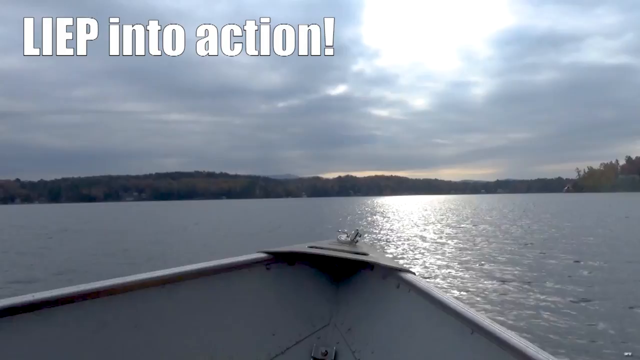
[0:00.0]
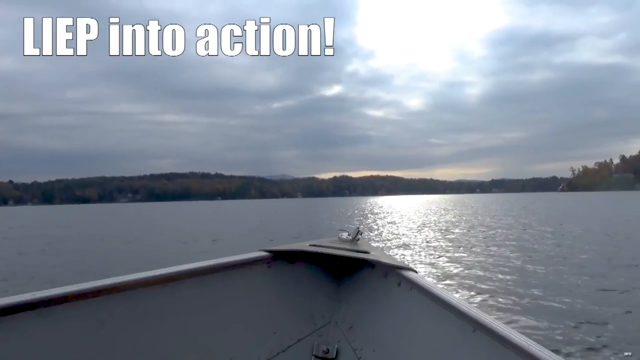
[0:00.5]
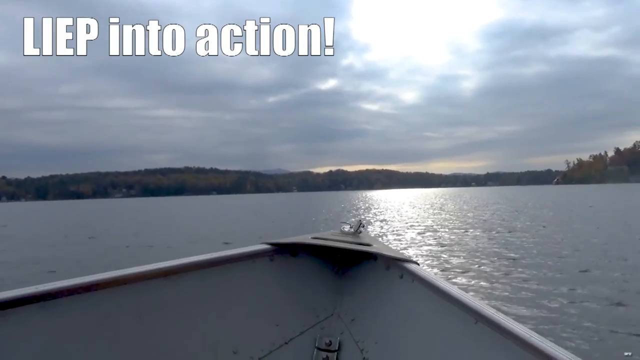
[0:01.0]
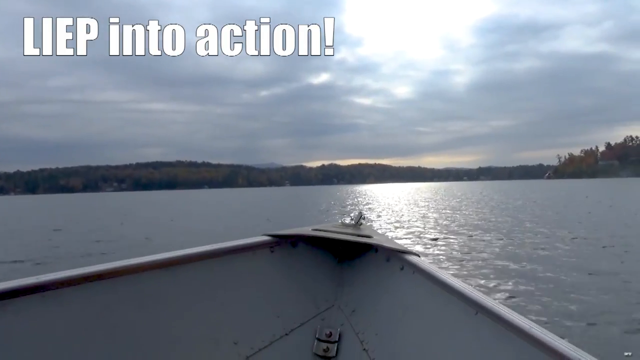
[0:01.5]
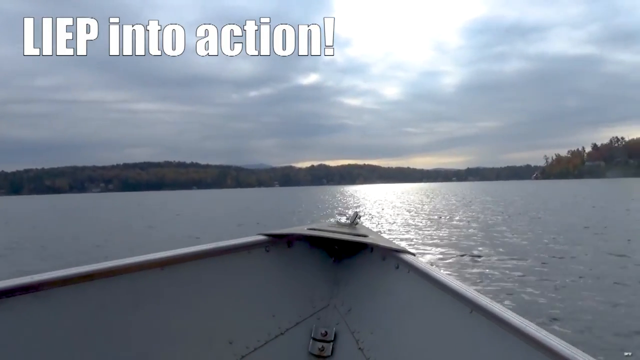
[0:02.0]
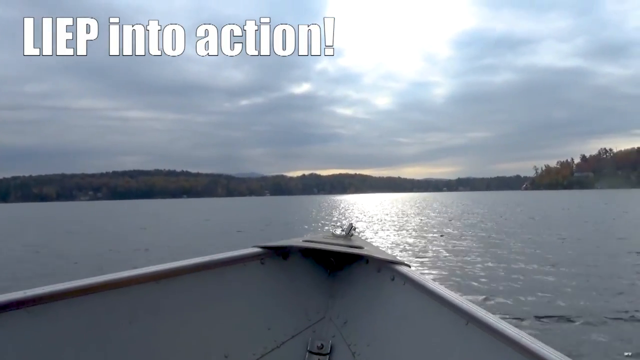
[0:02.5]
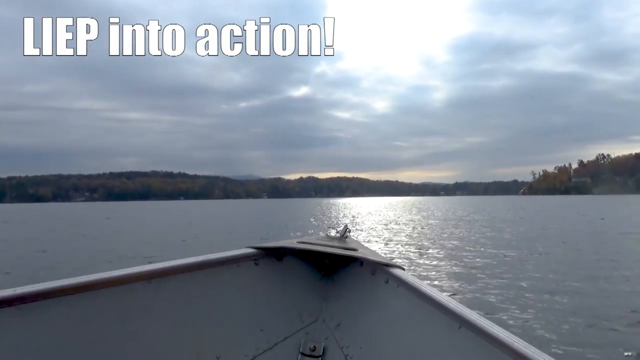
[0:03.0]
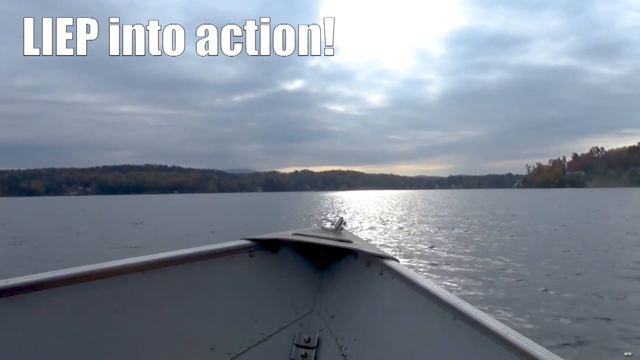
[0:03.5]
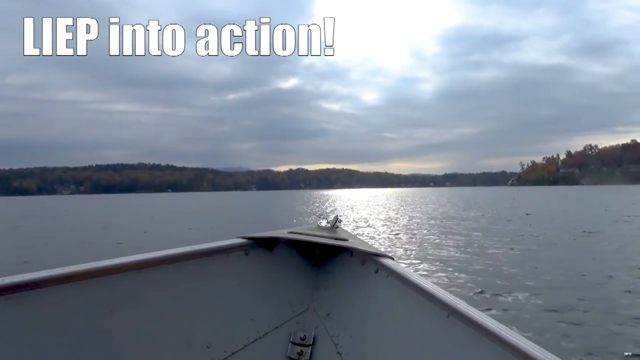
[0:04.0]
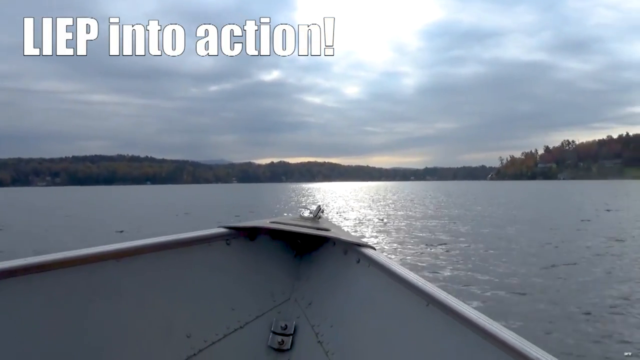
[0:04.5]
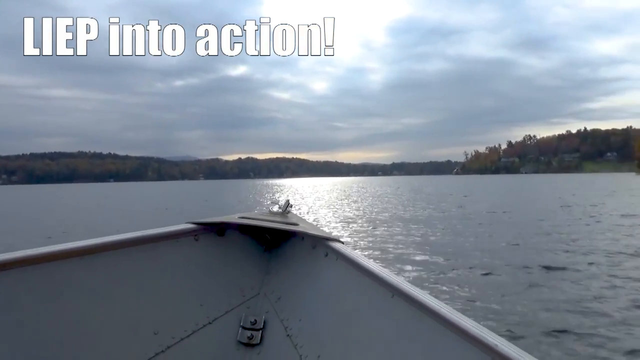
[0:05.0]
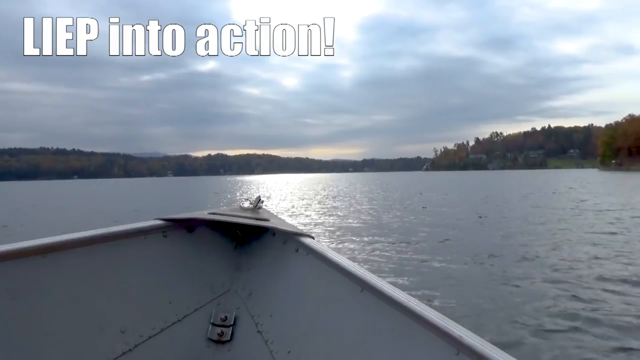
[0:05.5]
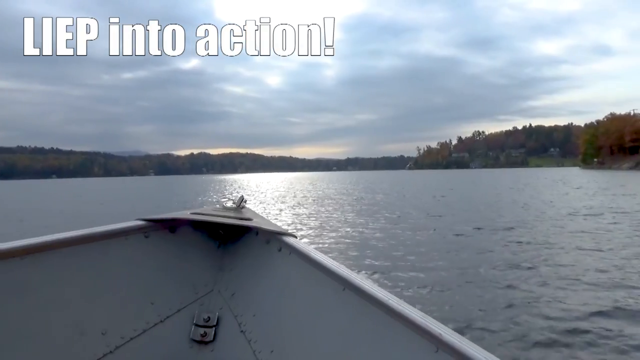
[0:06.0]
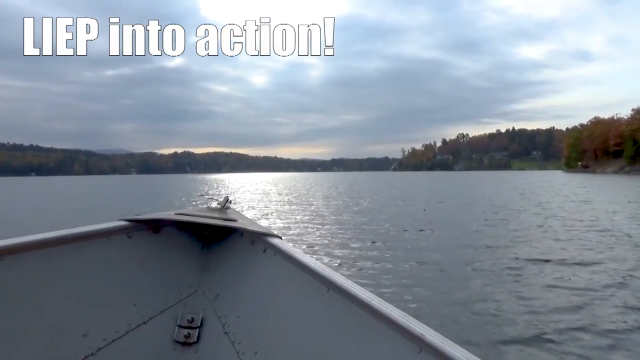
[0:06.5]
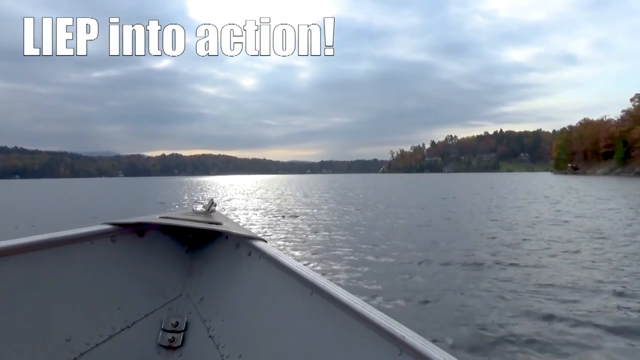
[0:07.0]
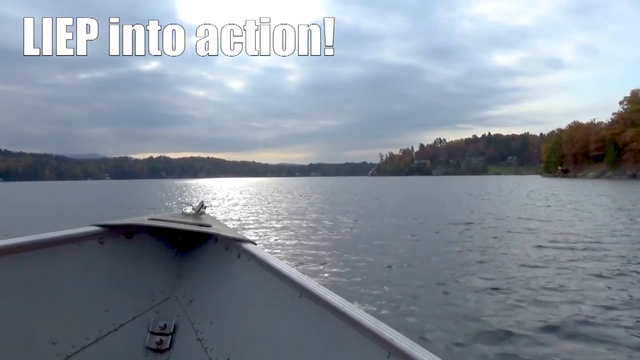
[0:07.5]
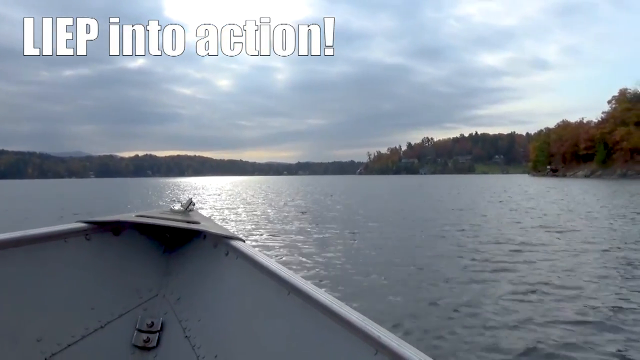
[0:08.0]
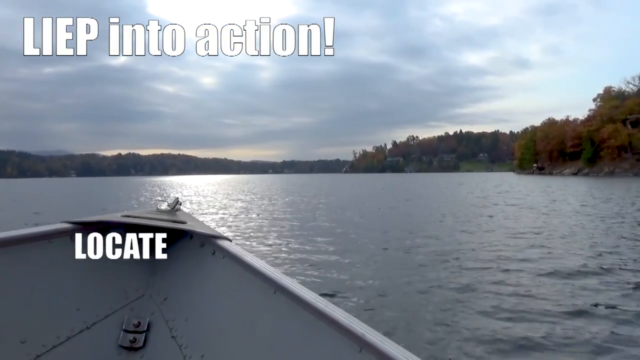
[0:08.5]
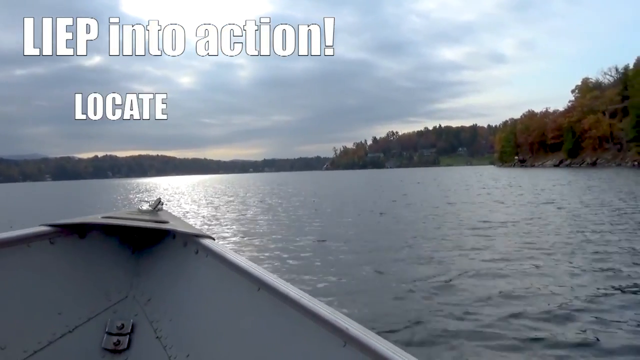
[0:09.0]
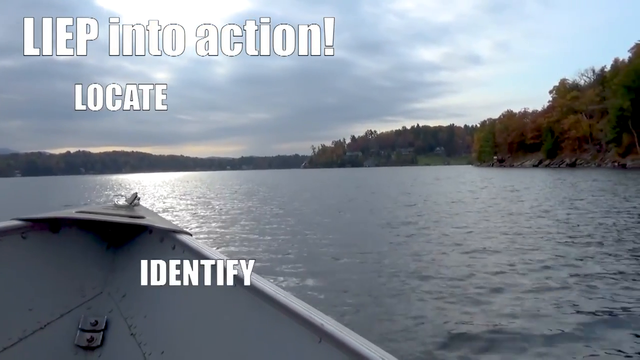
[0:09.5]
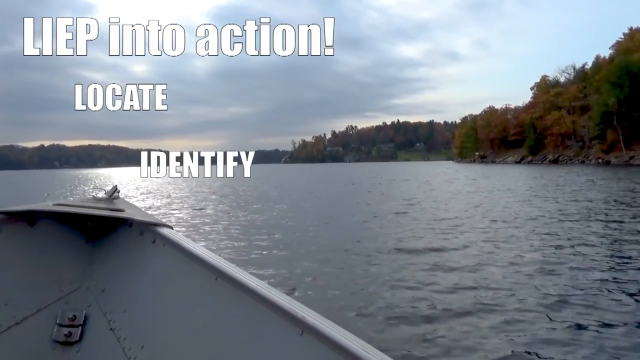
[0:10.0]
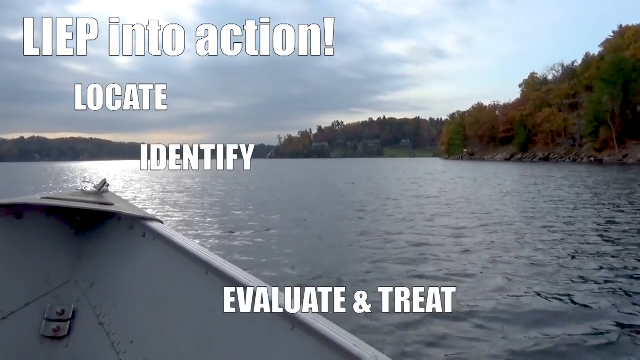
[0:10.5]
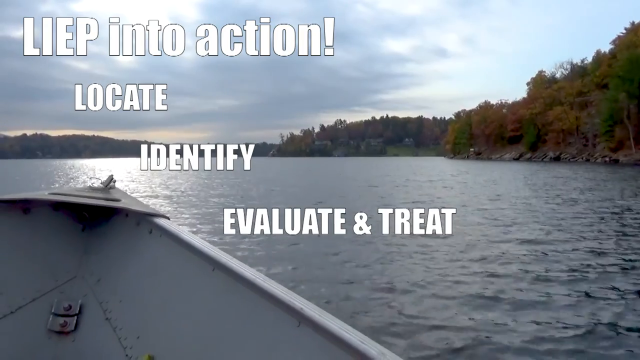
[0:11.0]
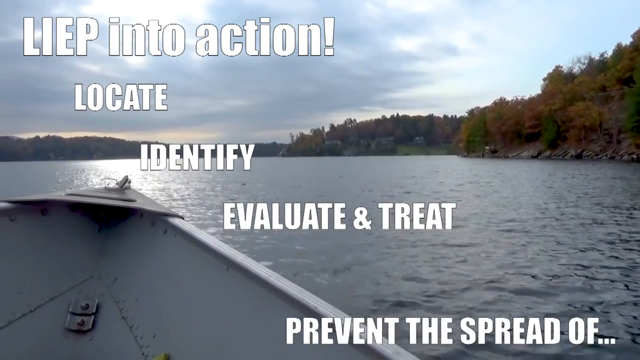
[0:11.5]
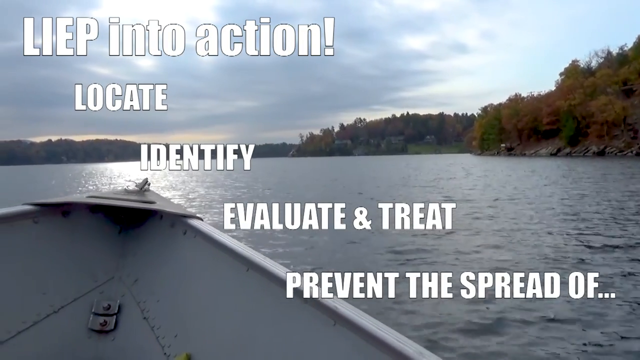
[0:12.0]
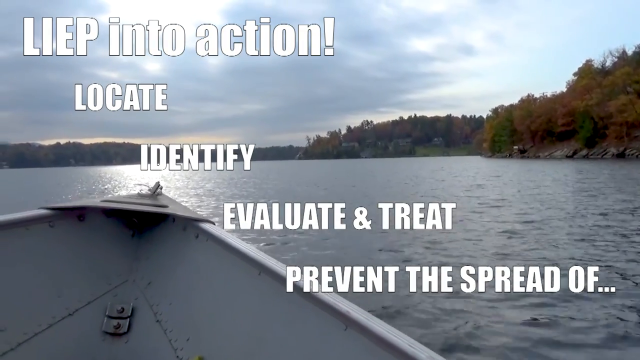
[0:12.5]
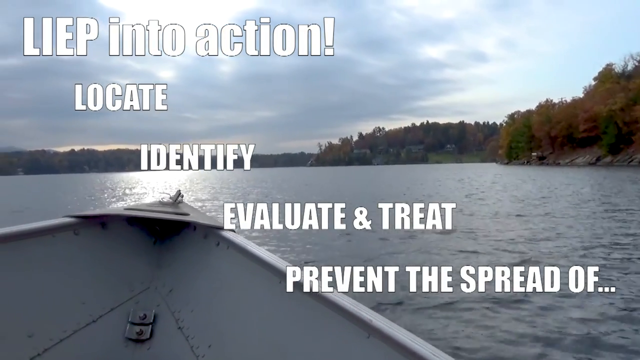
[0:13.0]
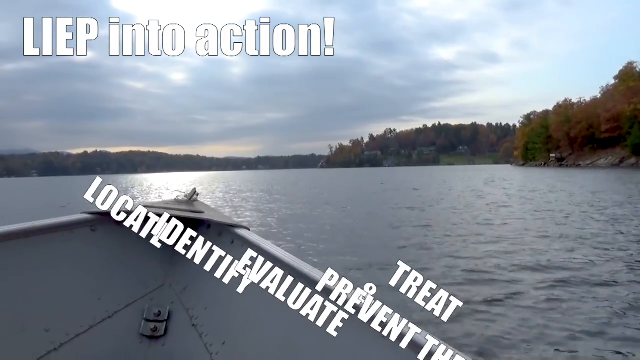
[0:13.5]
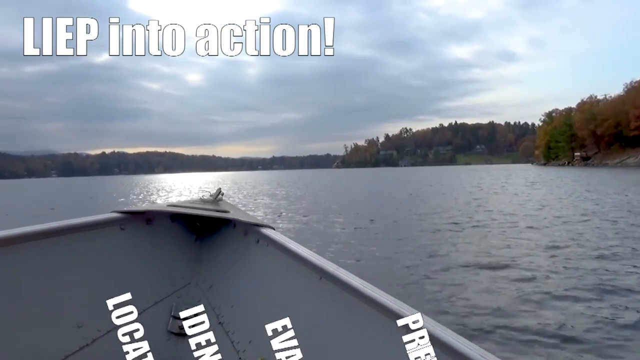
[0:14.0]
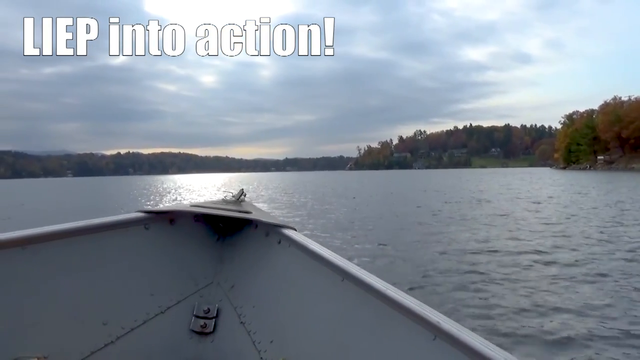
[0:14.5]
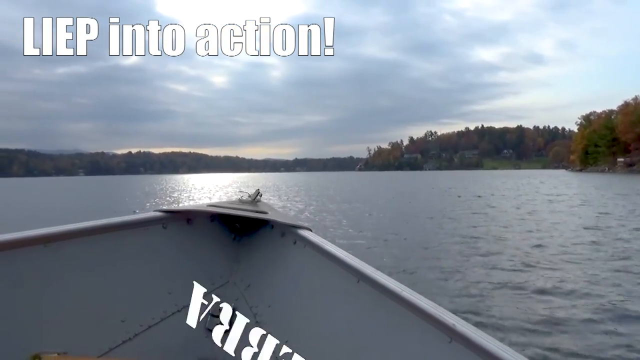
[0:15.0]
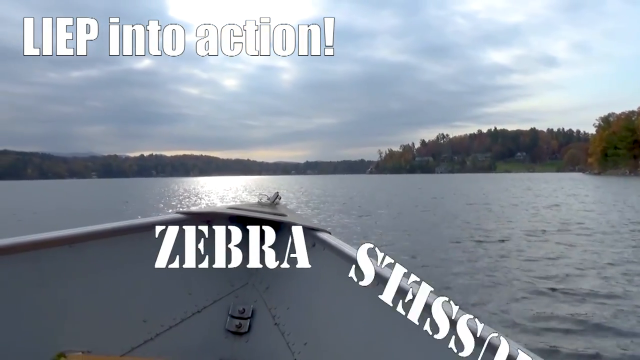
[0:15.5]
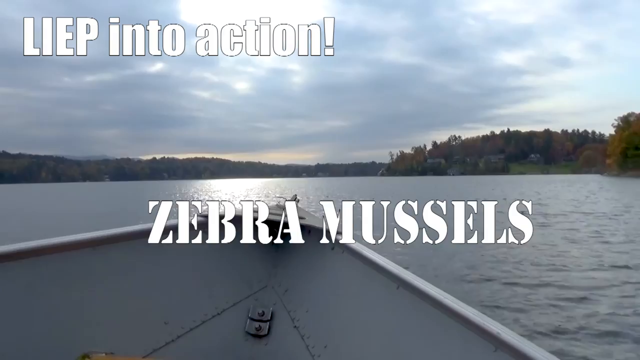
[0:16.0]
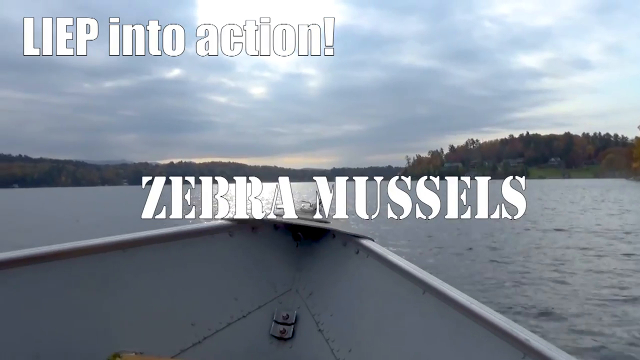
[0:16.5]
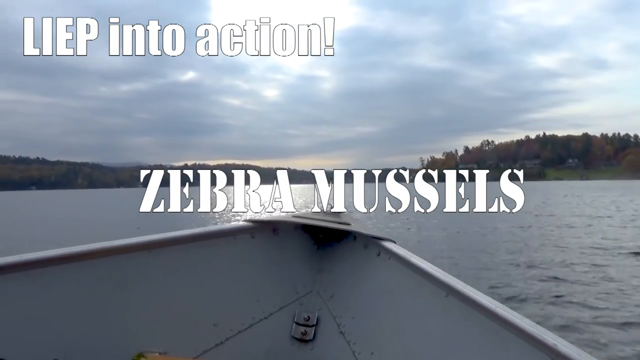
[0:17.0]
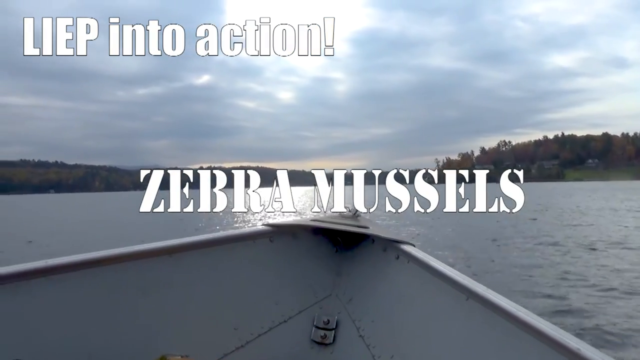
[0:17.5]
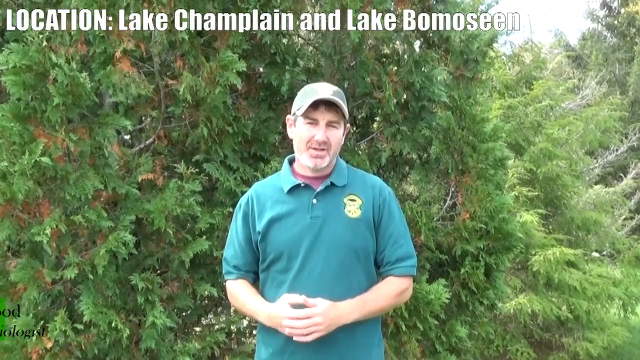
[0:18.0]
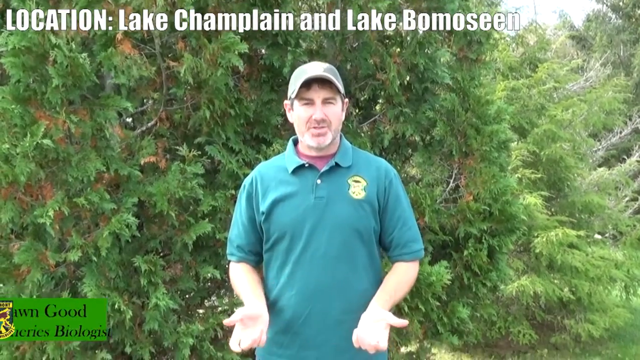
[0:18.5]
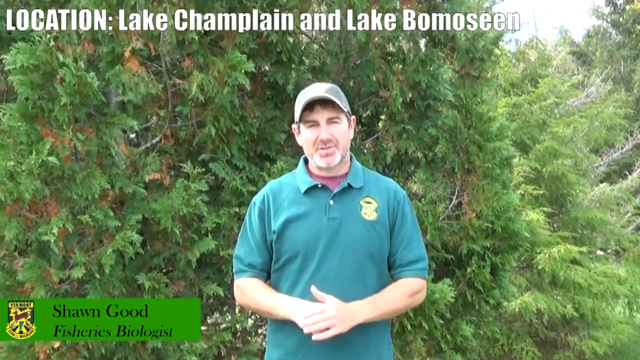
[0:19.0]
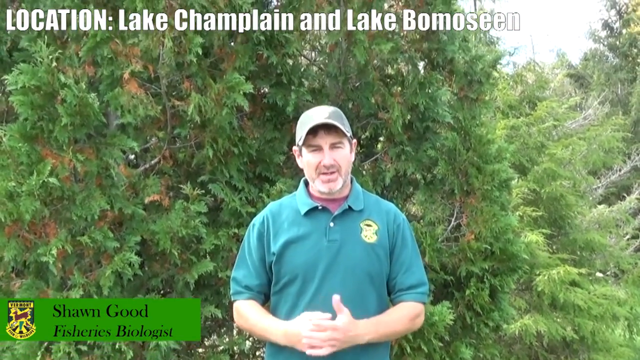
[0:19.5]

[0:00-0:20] The front of a gray boat is visible, and nothing else of the boat can be seen. The boat is on a large lake or body of water, moving at a fairly high rate of speed. Trees, vegetation and grass appear in the distance, with points of land extending out to the right side of the screen. In the upper left, big white letters read "Leap into action," with "Leap" spelled "LIEP." Beneath that are the words "locate," then "identify," then "identify and treat," and then "prevent the spread of zebra mussels." In the bottom left corner, the host is identified as Sean Good, fisheries biologist.